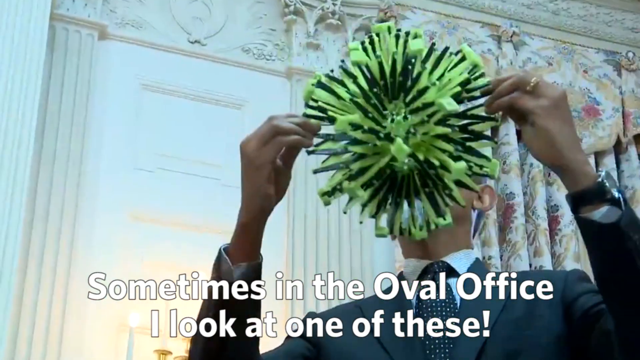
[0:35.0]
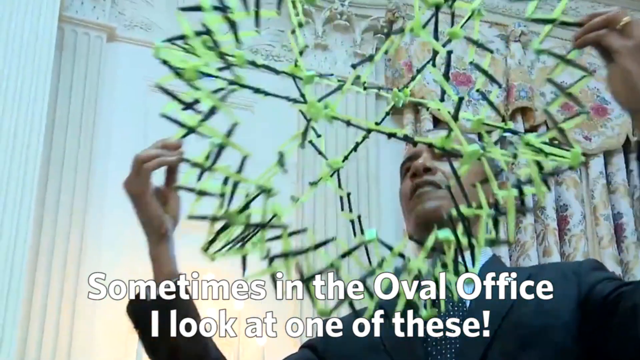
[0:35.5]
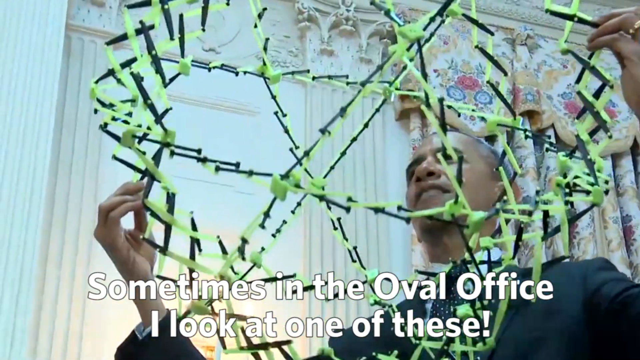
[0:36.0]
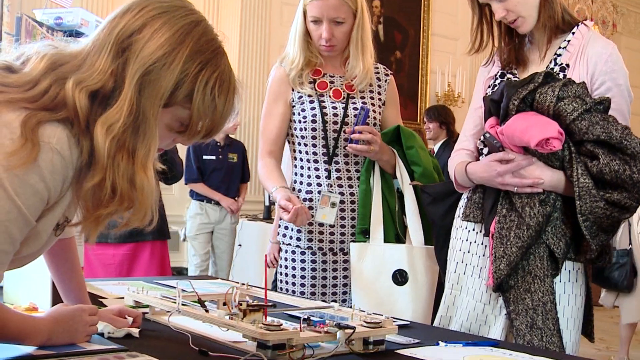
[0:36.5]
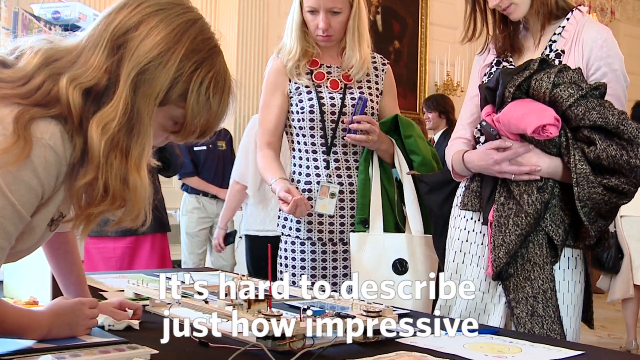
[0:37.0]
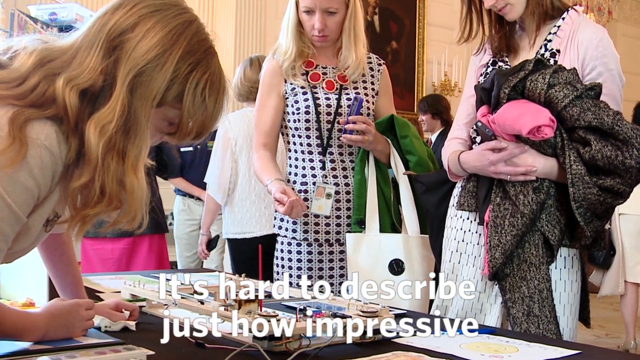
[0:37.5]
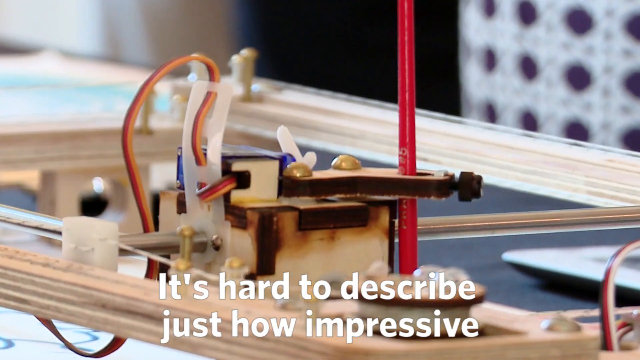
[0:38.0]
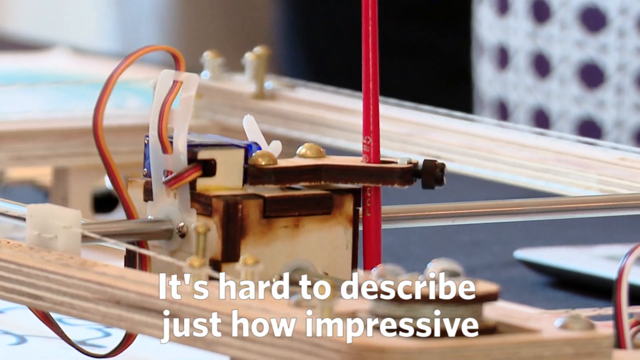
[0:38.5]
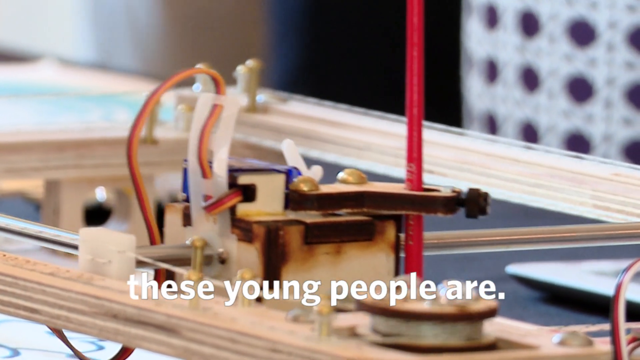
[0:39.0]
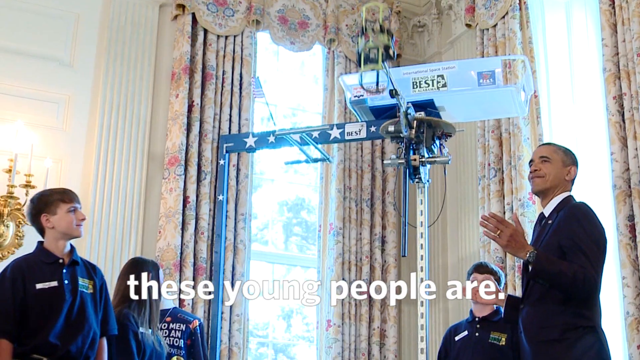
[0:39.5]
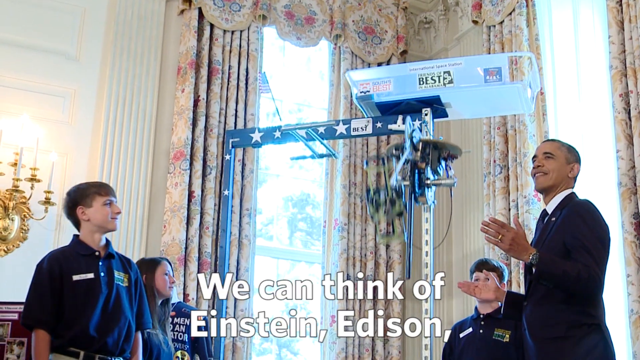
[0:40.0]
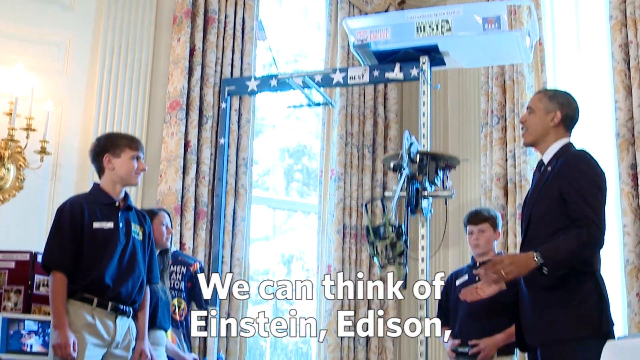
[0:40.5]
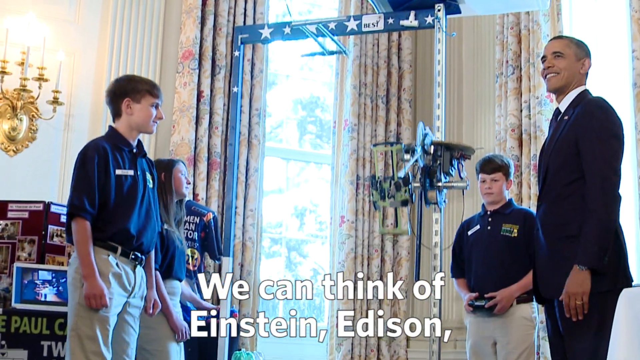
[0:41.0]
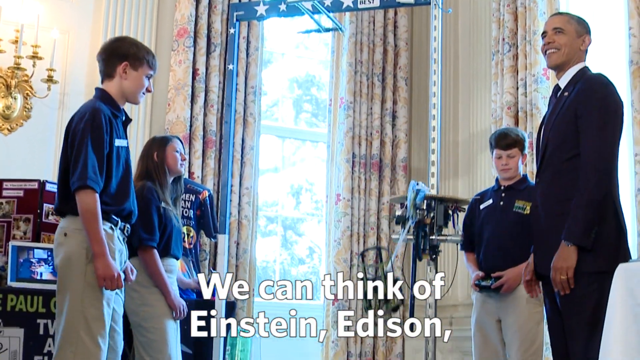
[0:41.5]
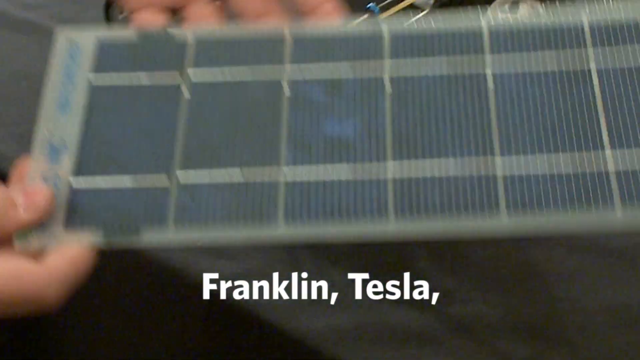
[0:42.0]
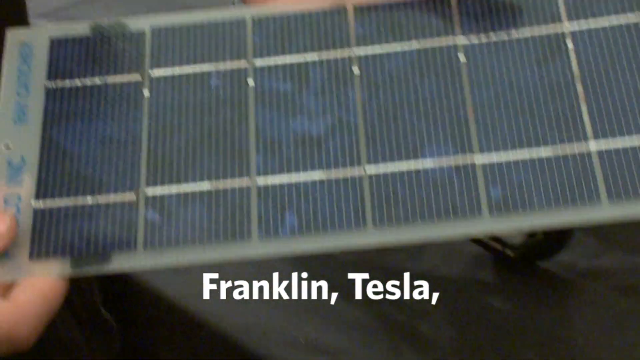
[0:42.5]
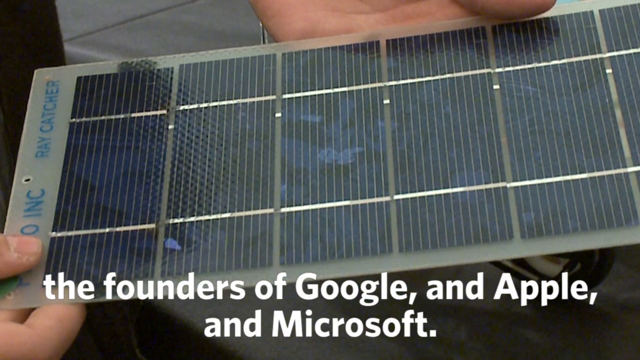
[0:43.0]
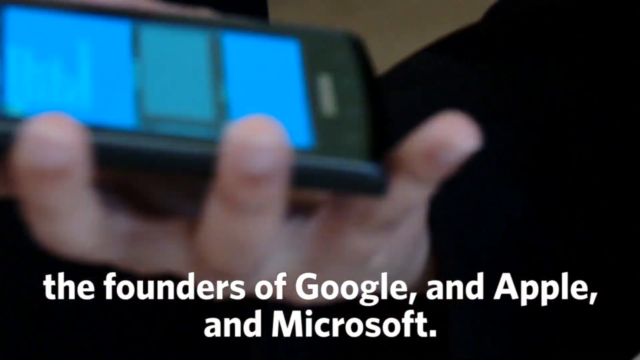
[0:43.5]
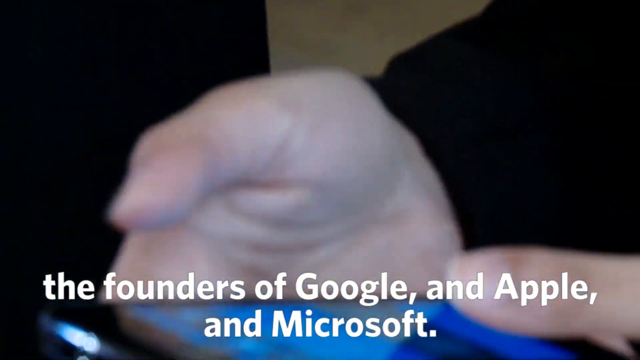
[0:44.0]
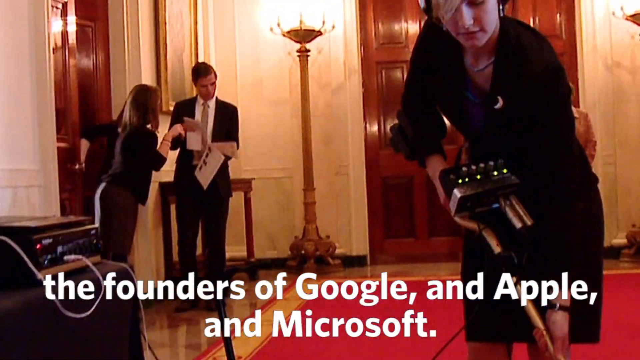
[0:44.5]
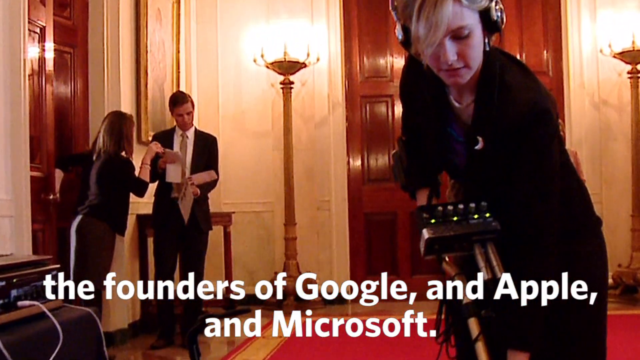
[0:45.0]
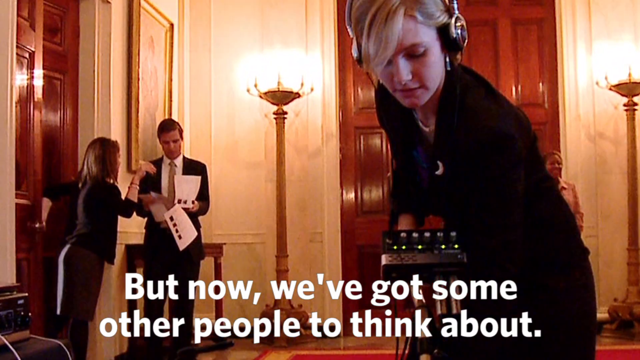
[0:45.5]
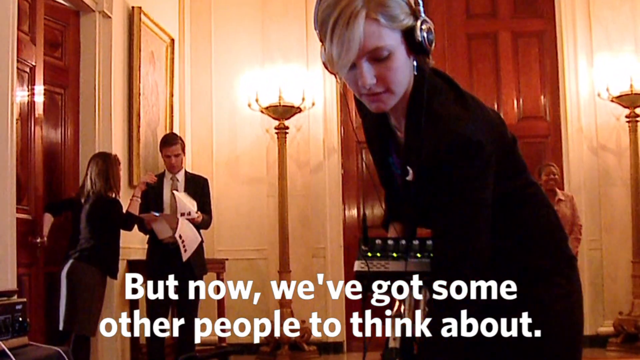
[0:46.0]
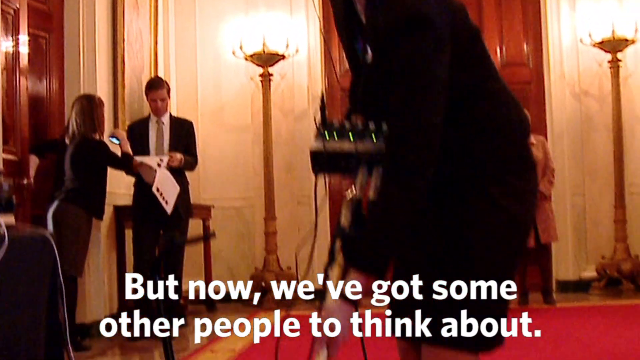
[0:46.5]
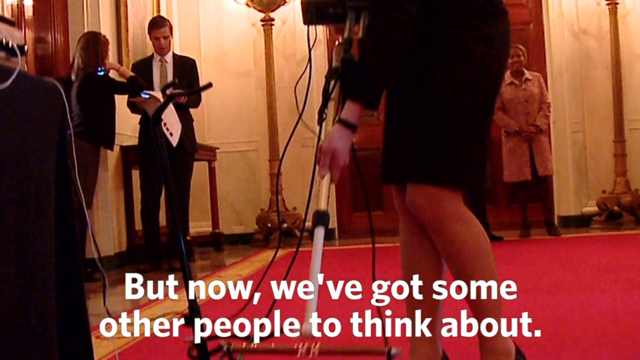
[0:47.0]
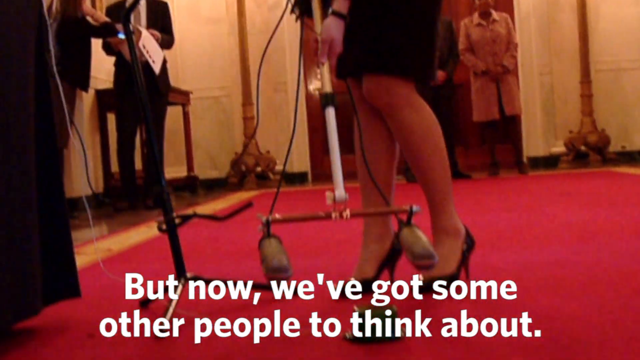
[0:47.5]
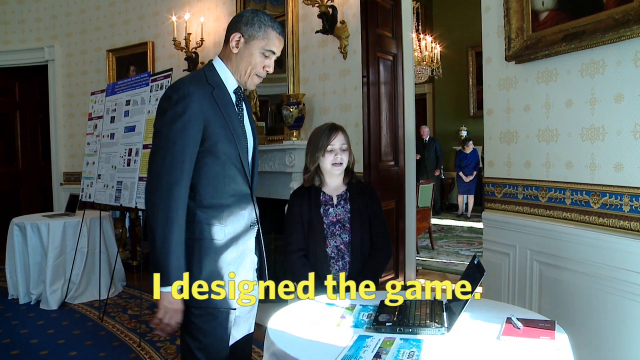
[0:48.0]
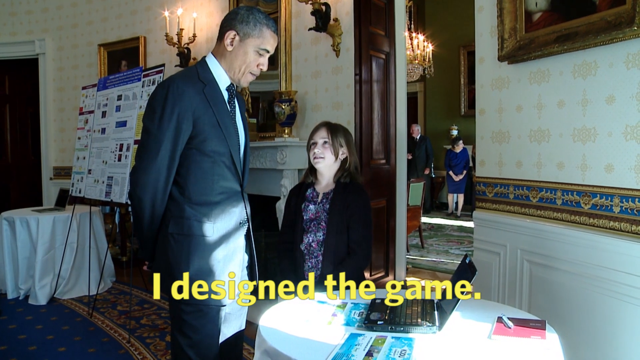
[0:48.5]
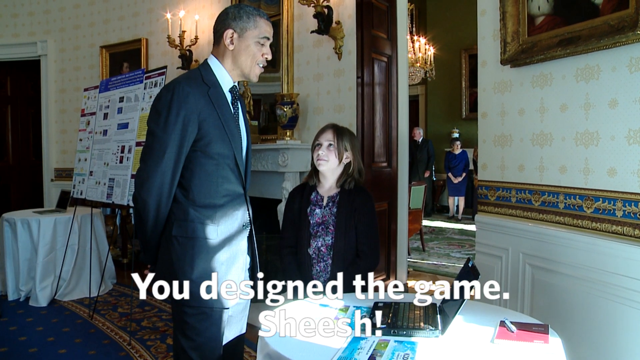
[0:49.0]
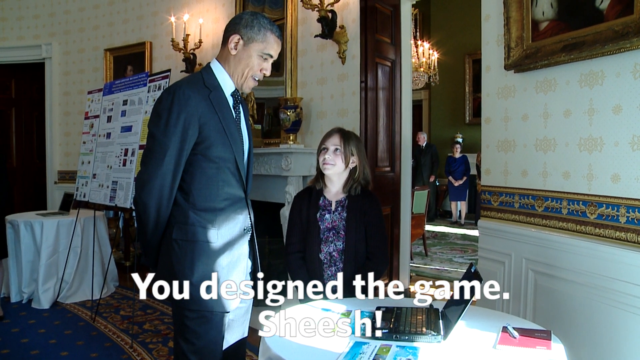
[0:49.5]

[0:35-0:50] At the White House, the video focuses on robotics and science. President Barack Obama toys and plays with some of the inventions made by high school students, who have designed different games and kind of robotic contraptions. Obama gives the students one-on-one attention. Some of the groups are made up of boys and girls, while some projects have just a single student, like a girl by herself. At times the video cuts to people who have come to the science fair to see the projects.